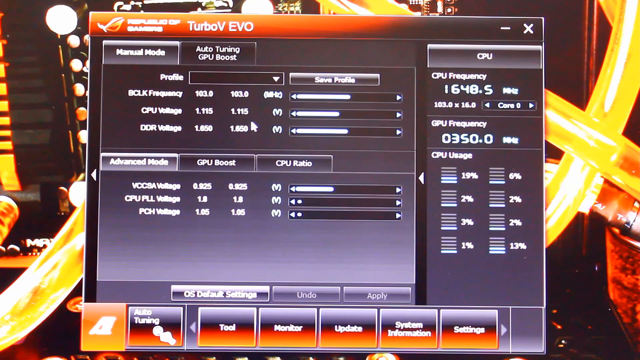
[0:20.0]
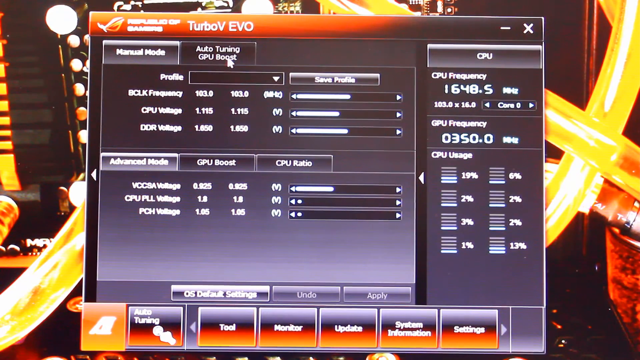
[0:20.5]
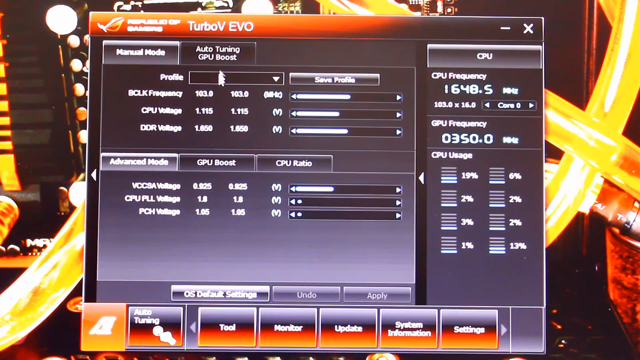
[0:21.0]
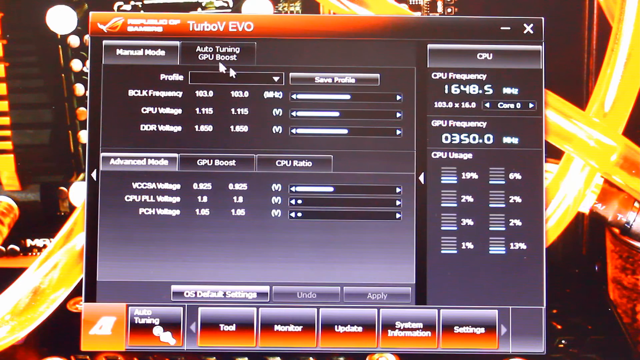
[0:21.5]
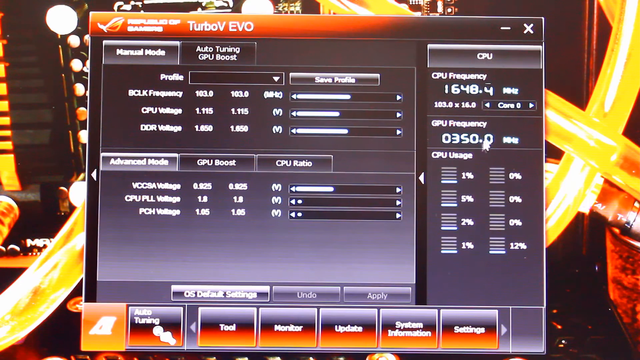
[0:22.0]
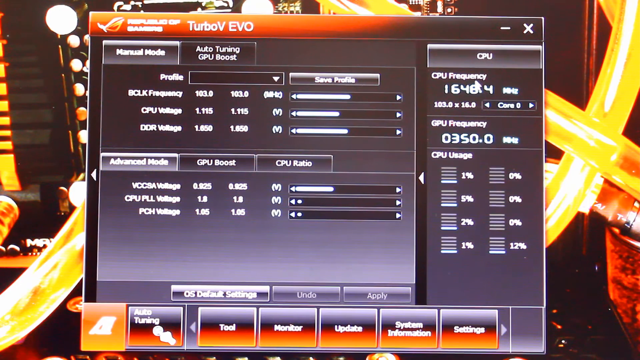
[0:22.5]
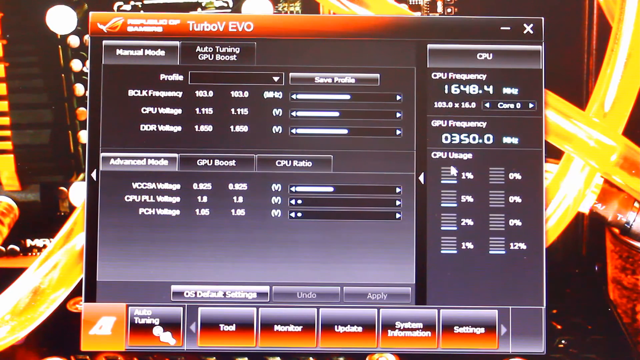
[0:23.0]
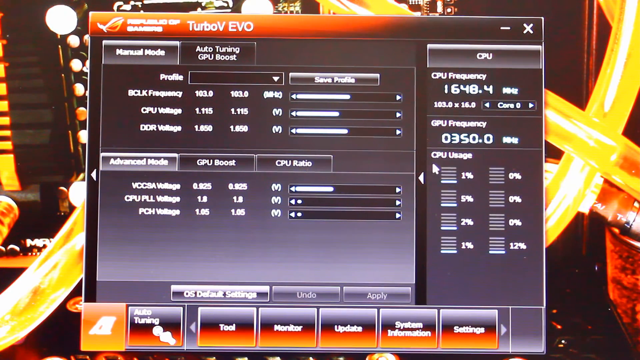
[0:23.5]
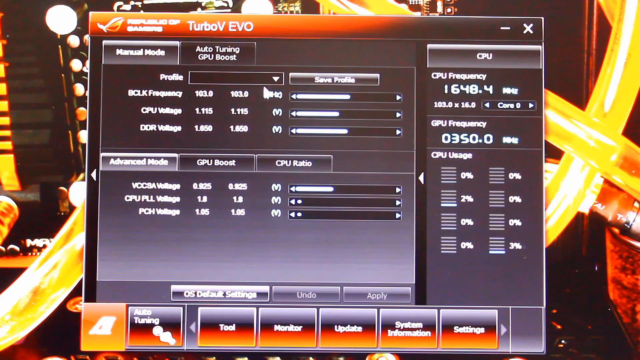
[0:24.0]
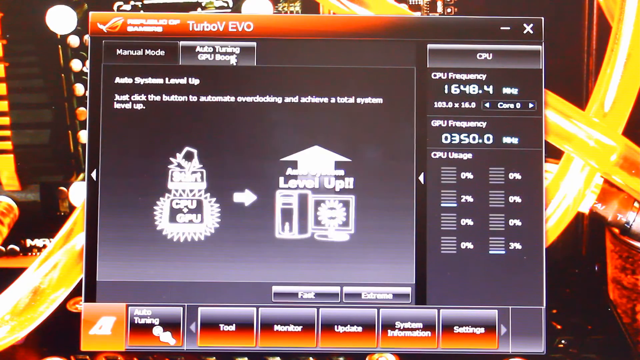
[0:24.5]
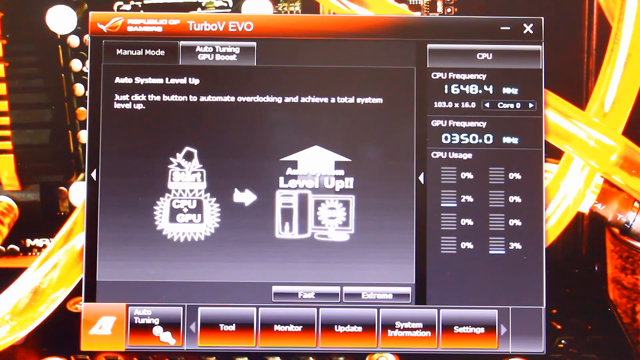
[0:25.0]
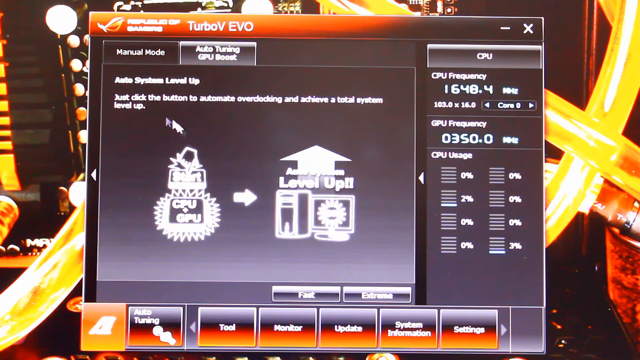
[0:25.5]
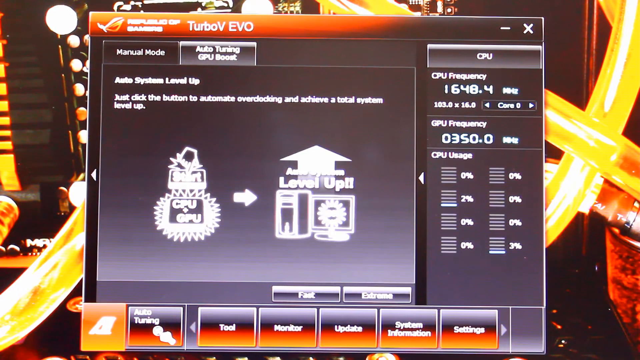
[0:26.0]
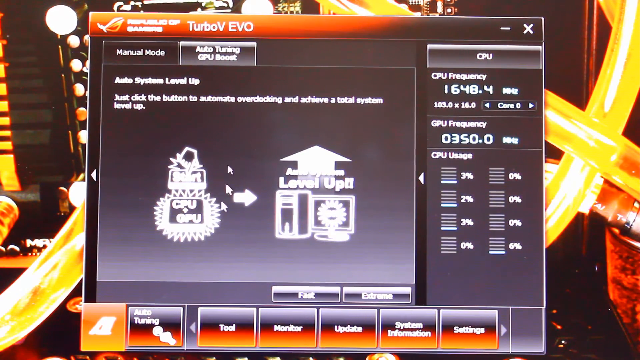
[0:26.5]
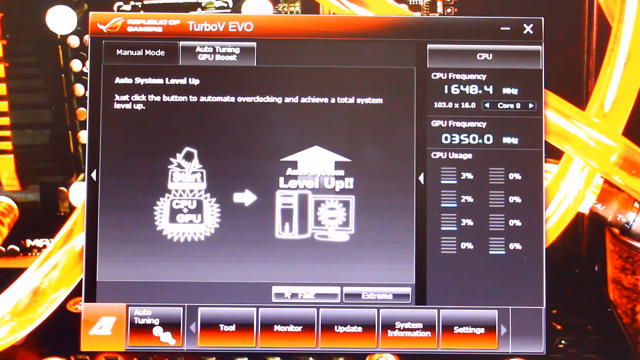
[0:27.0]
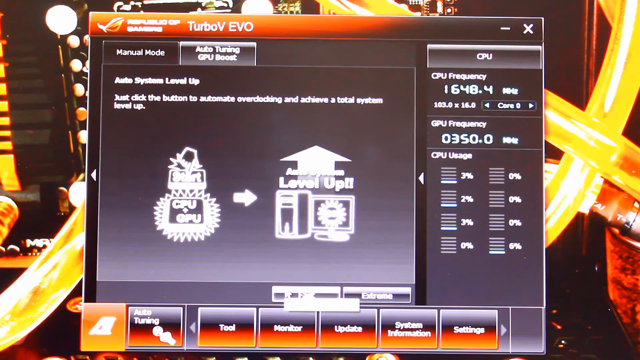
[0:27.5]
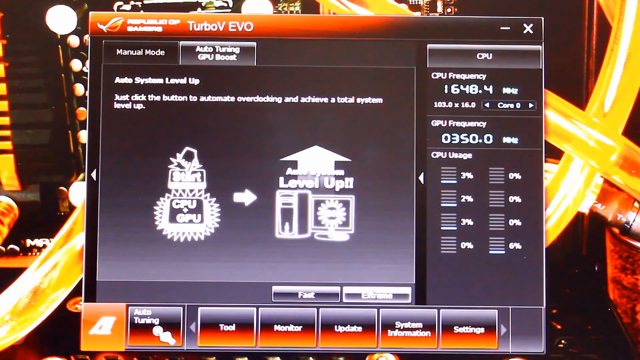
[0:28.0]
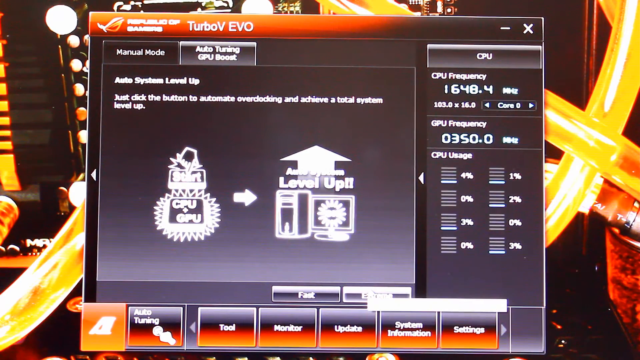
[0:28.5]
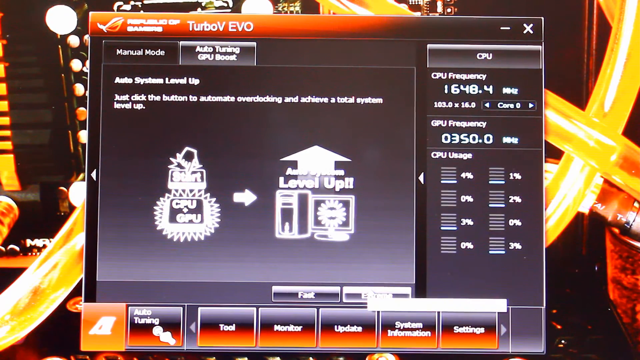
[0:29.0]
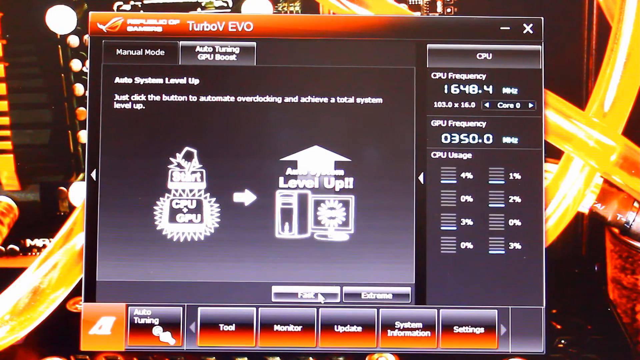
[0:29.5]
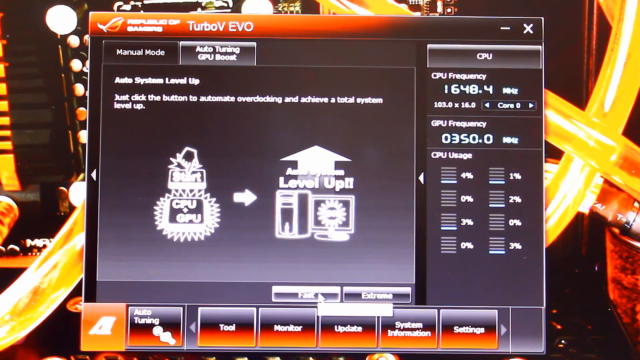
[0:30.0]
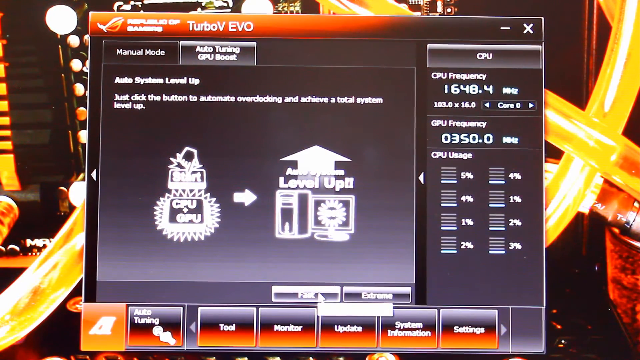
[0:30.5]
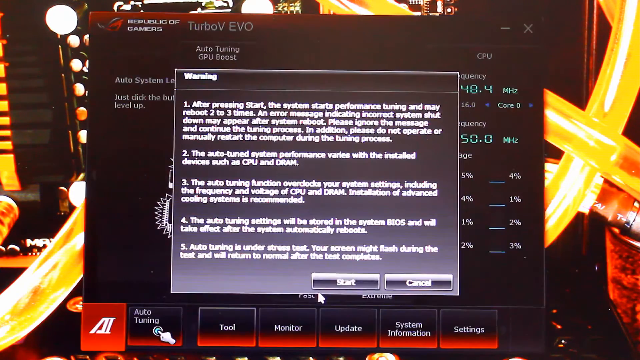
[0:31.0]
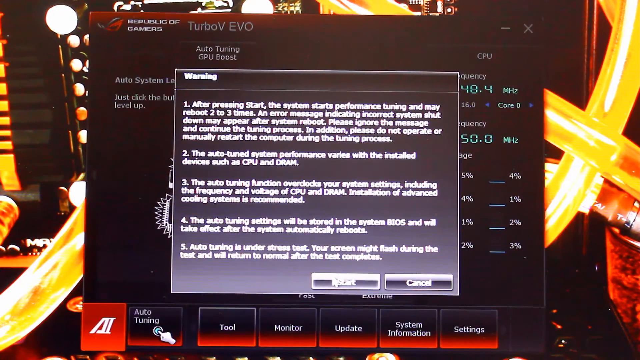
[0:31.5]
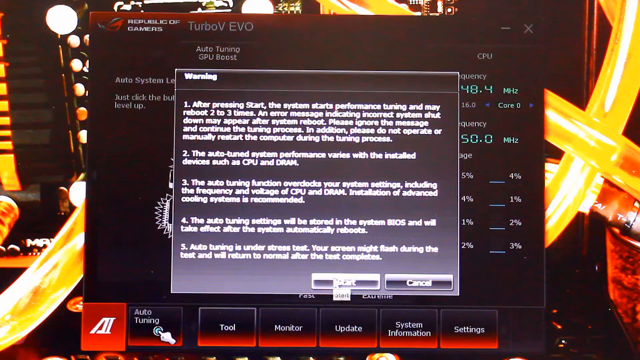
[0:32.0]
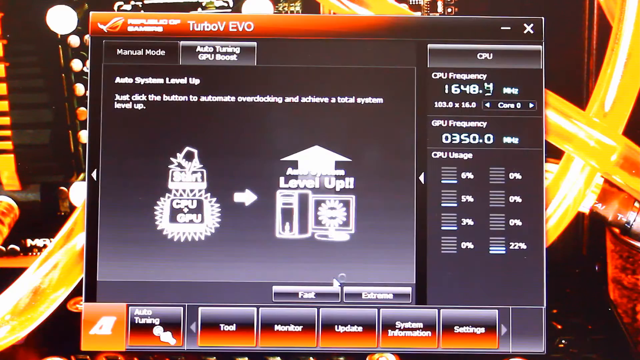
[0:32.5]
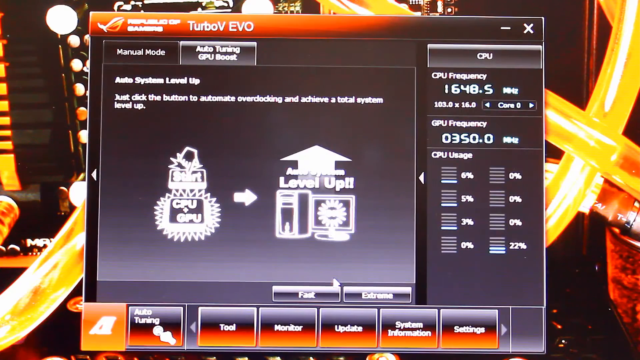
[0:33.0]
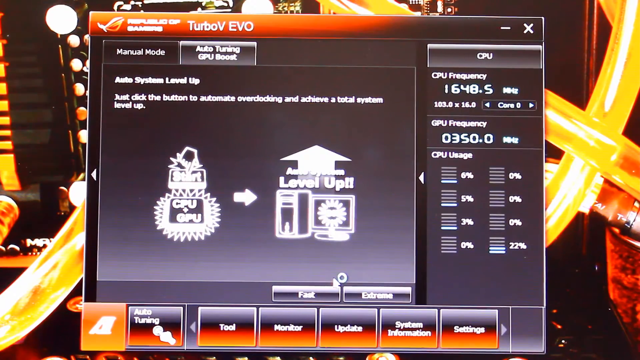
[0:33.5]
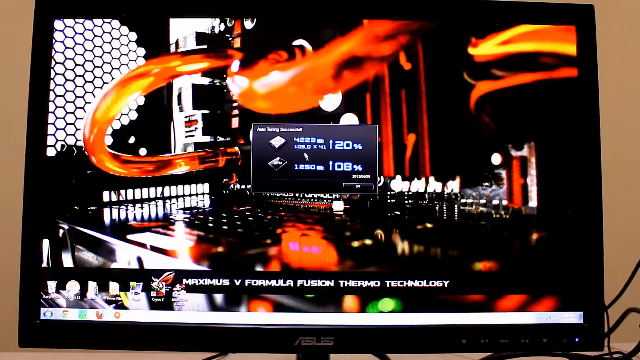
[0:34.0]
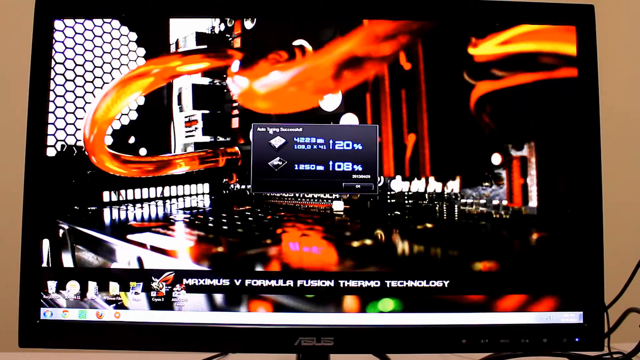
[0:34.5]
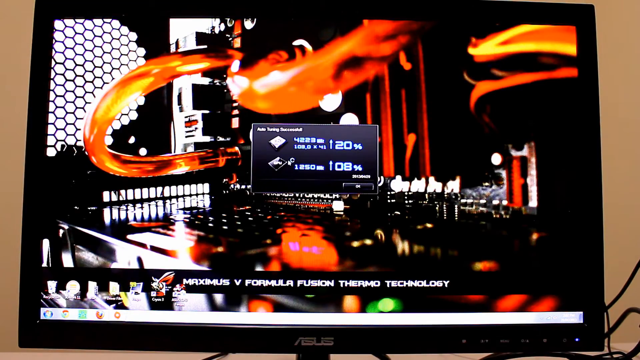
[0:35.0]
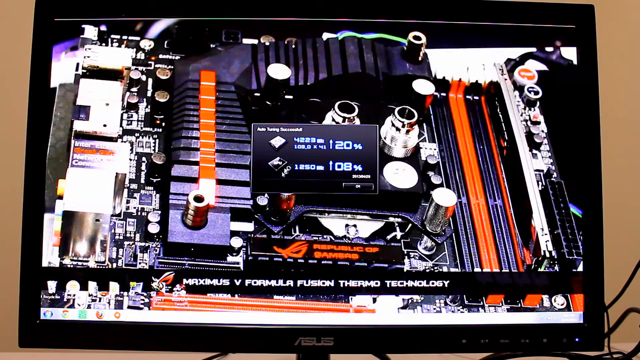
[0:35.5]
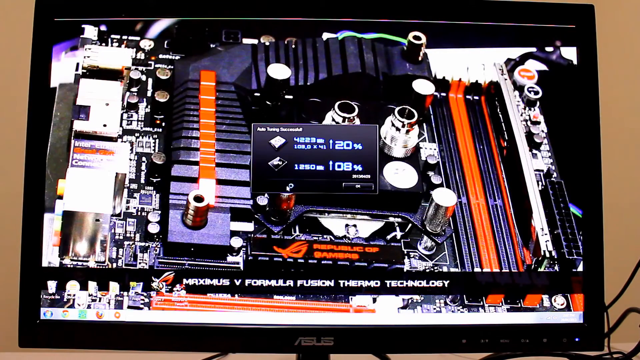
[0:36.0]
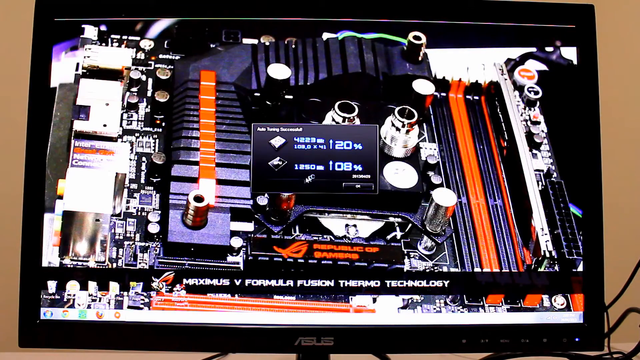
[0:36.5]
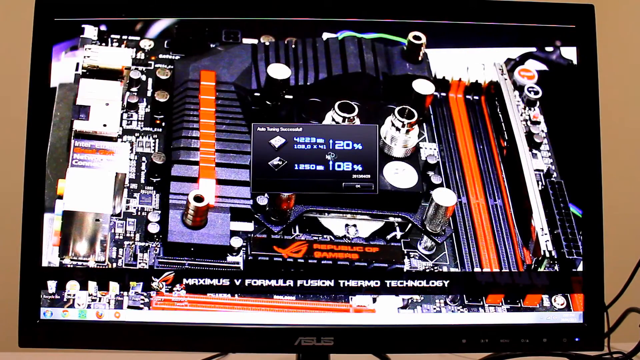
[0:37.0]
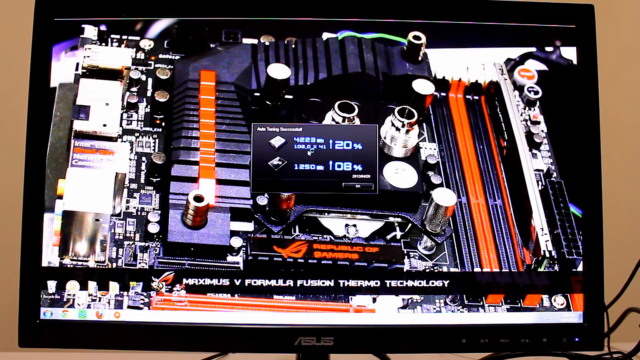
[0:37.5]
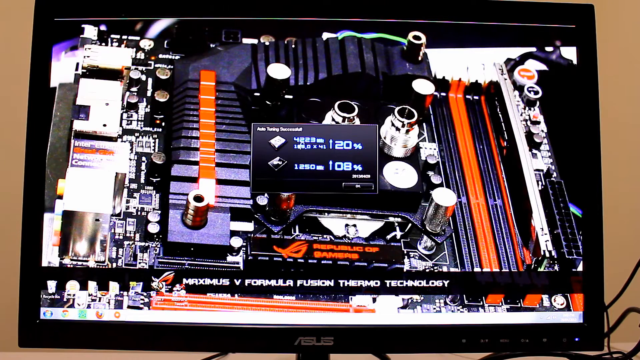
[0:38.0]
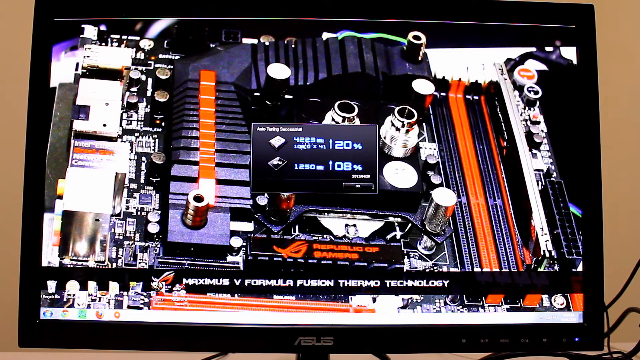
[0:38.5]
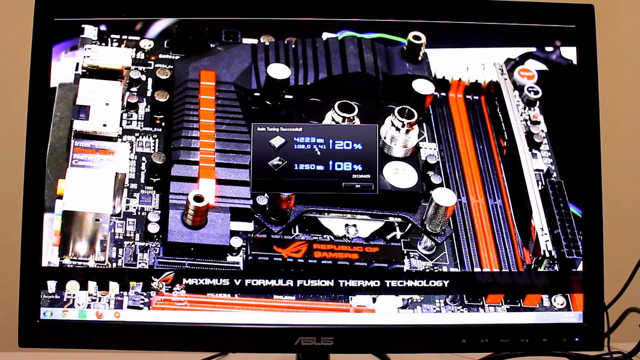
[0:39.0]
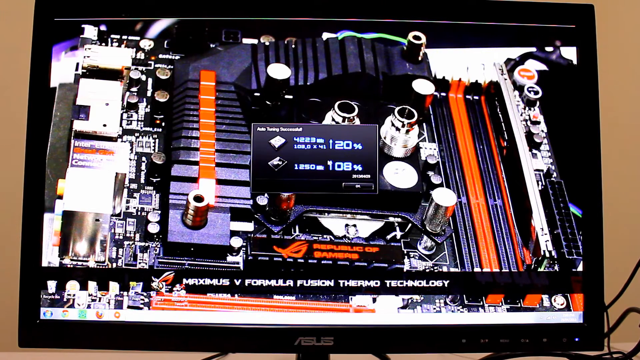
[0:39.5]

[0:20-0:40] The program TurboV Evo is open, with a wallpaper of the inside of a computer behind it. The mouse points at various options in the program, such as the CPU usage, GPU frequency and CPU frequency. The mouse then goes to the top of the program and clicks a button called Auto-Tuning GPU Boost. It hovers over two options at the bottom, one called fast and the other called extreme, and clicks the fast option. A warning pops up and the mouse clicks start. The mouse hovers up over the program as it starts, while the wallpaper in the background changes to different views of the inside of a computer. The mouse keeps hovering over different options in the program, pointing out the changes the program will make to the computer. The program is now smaller in size.